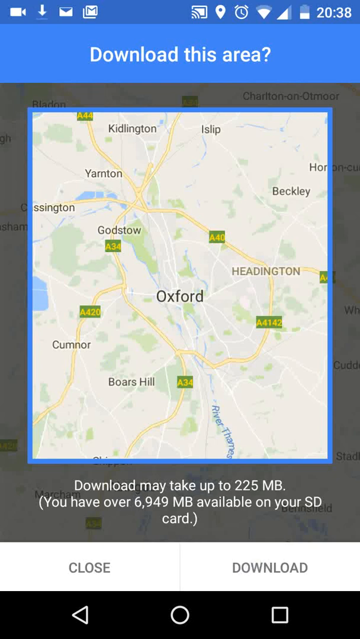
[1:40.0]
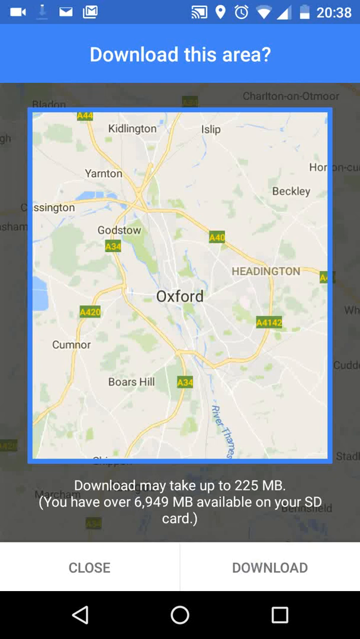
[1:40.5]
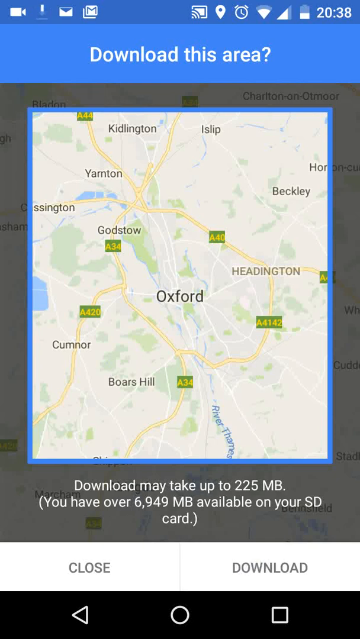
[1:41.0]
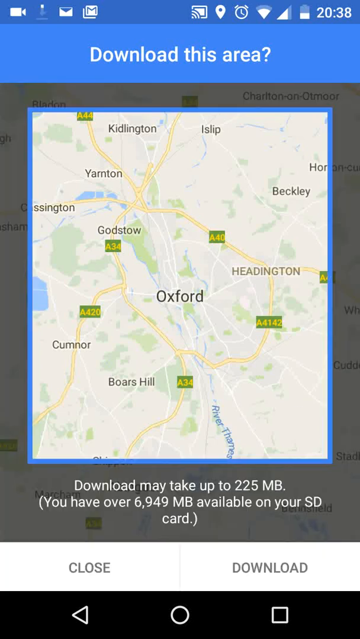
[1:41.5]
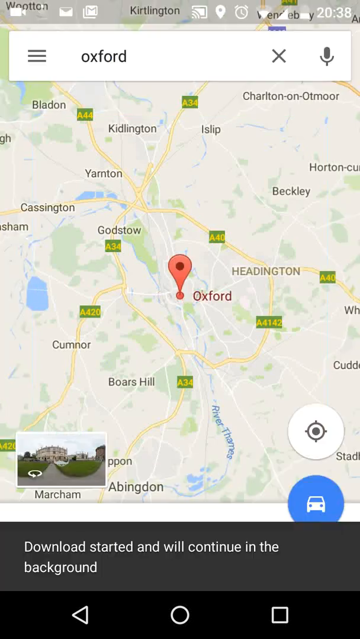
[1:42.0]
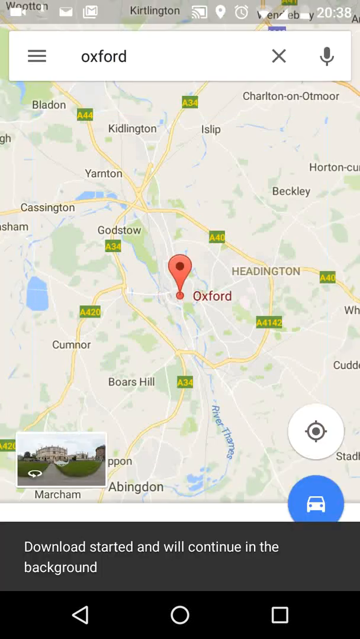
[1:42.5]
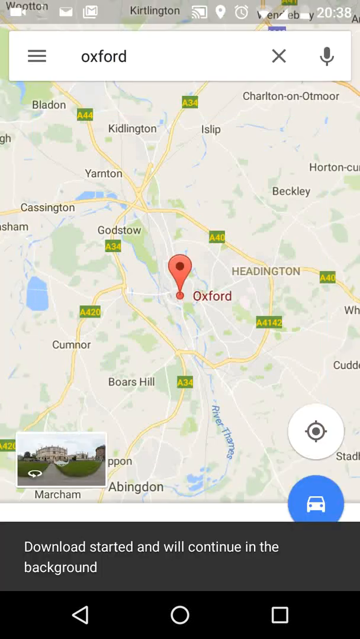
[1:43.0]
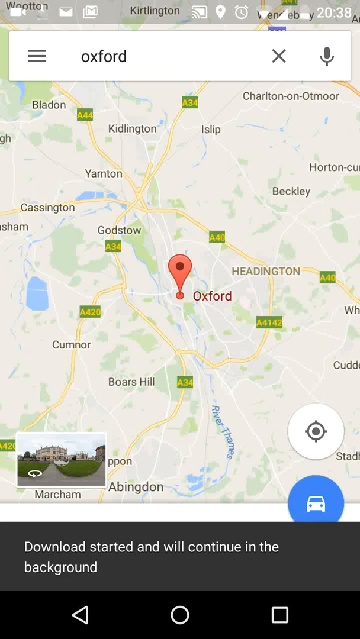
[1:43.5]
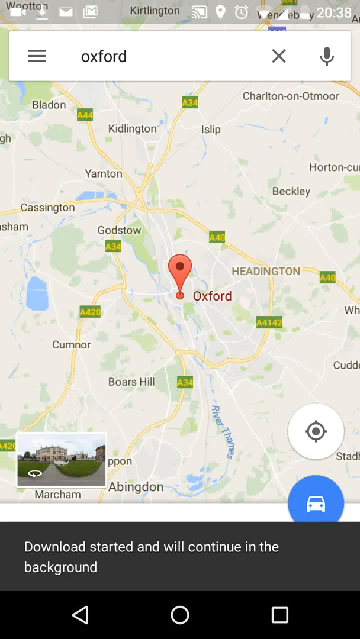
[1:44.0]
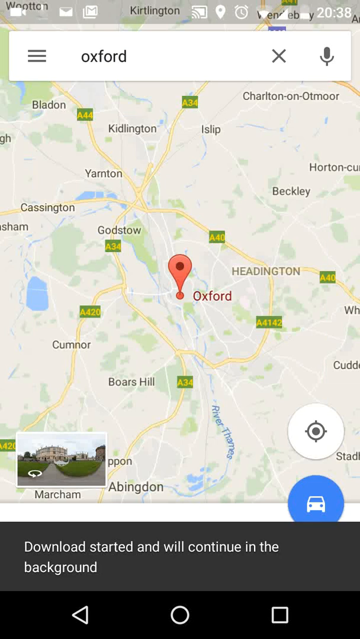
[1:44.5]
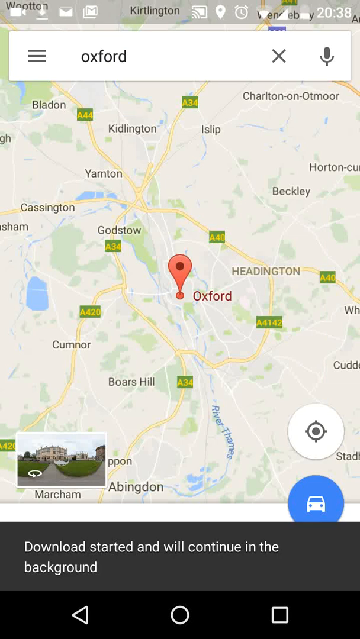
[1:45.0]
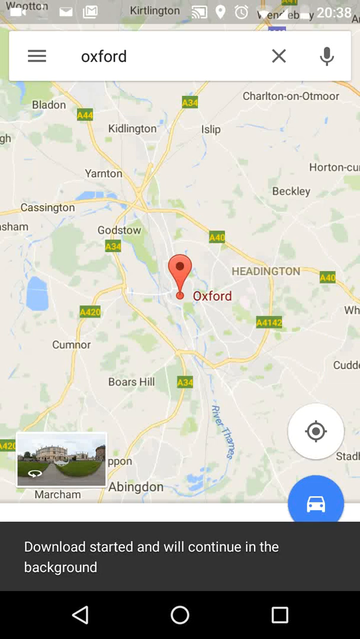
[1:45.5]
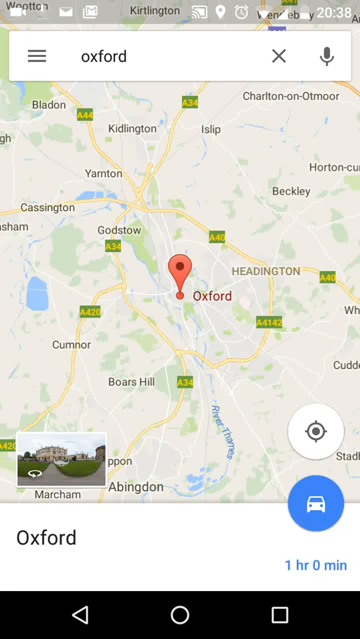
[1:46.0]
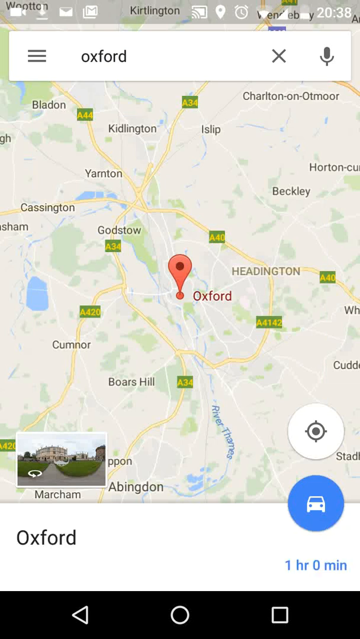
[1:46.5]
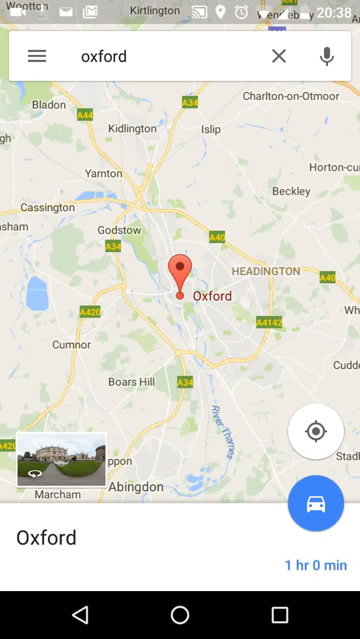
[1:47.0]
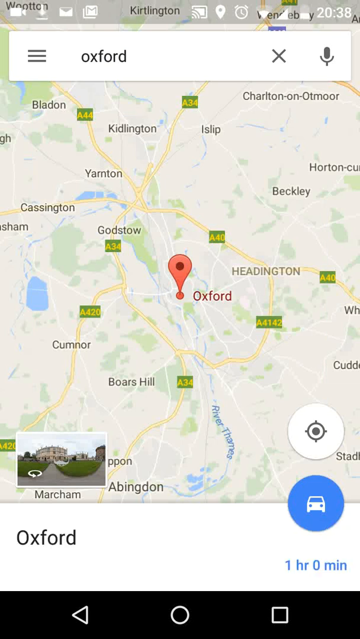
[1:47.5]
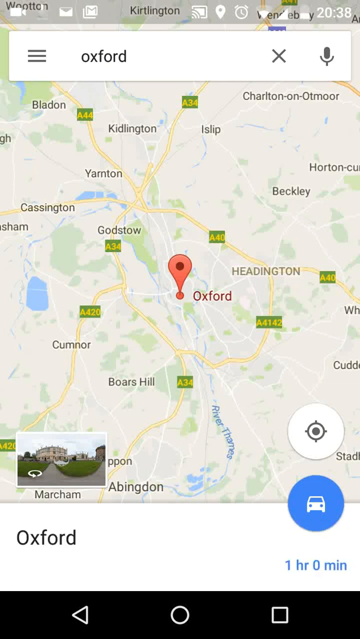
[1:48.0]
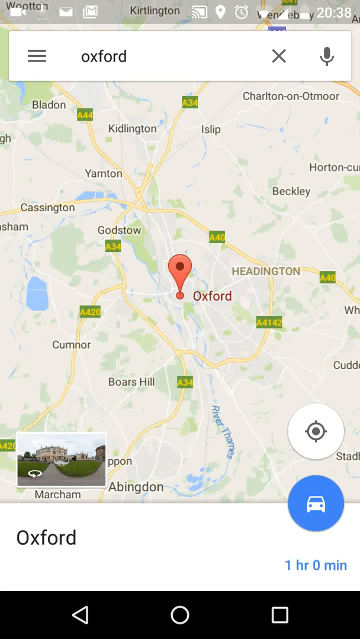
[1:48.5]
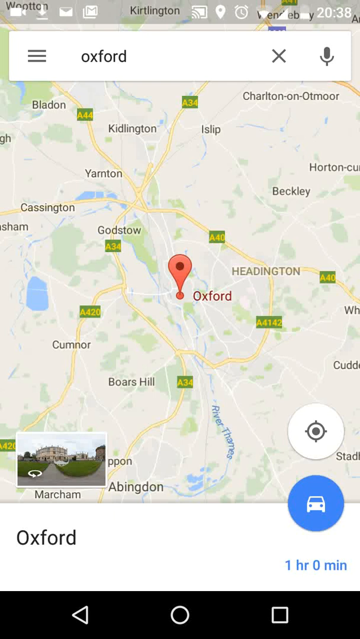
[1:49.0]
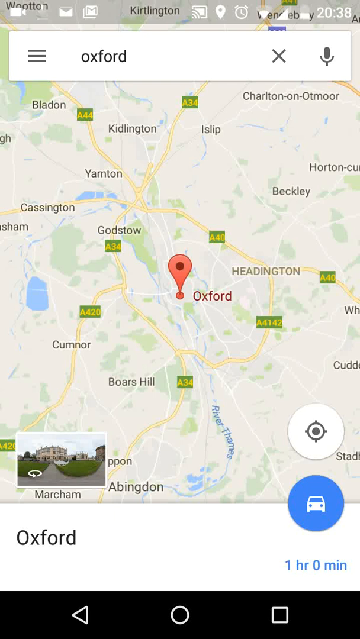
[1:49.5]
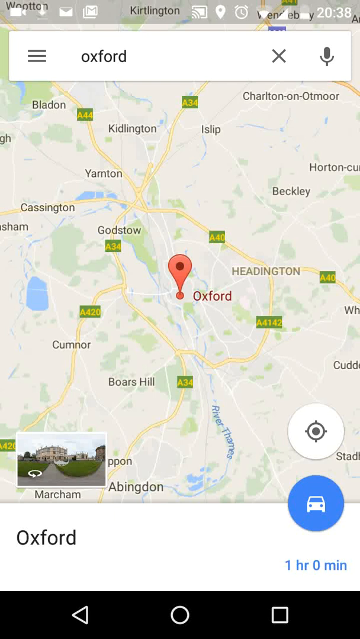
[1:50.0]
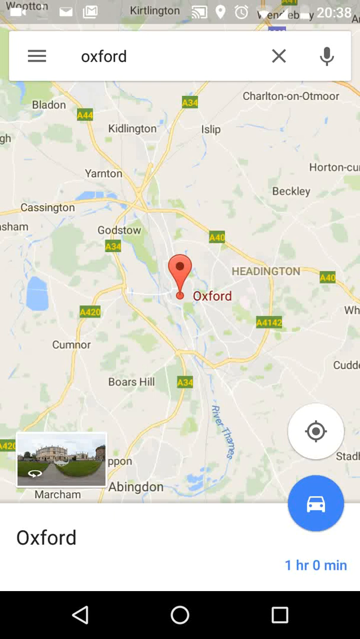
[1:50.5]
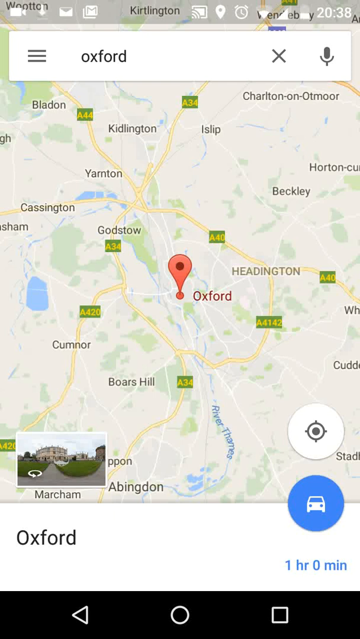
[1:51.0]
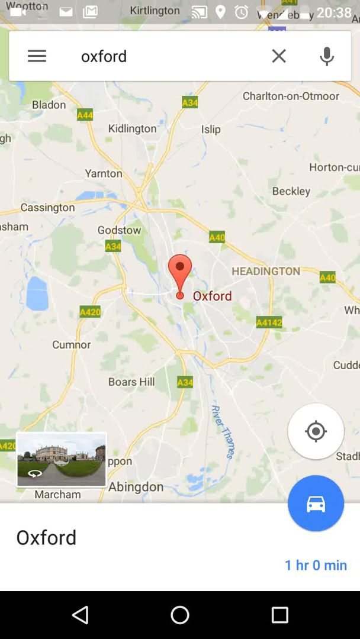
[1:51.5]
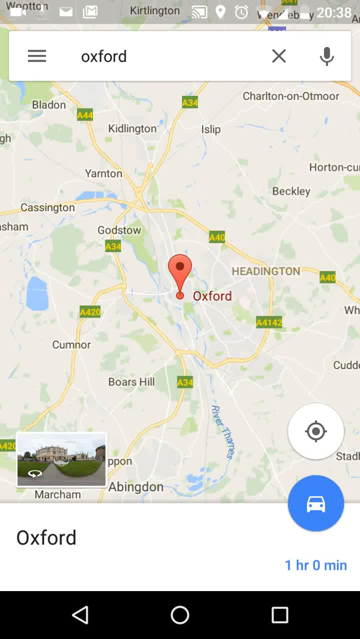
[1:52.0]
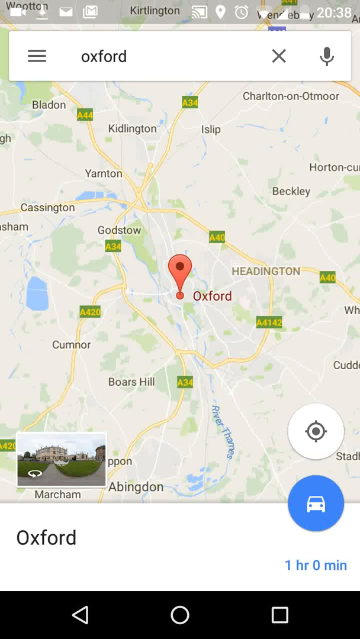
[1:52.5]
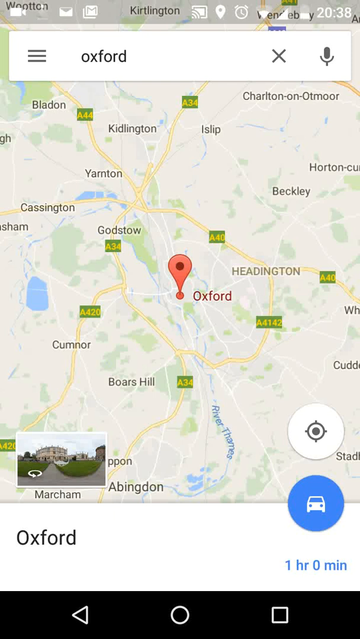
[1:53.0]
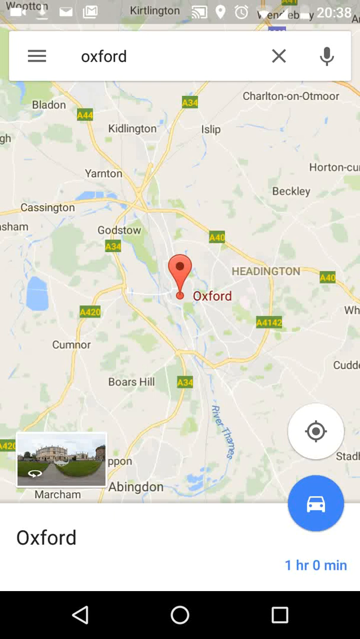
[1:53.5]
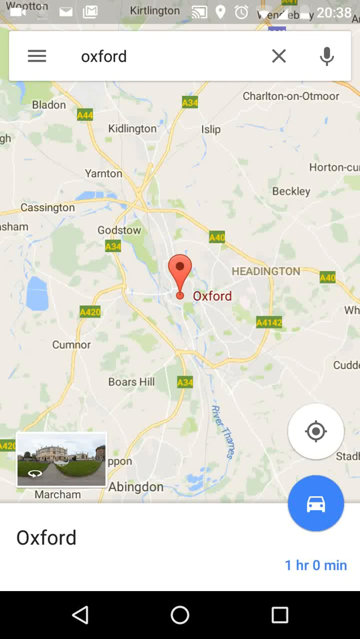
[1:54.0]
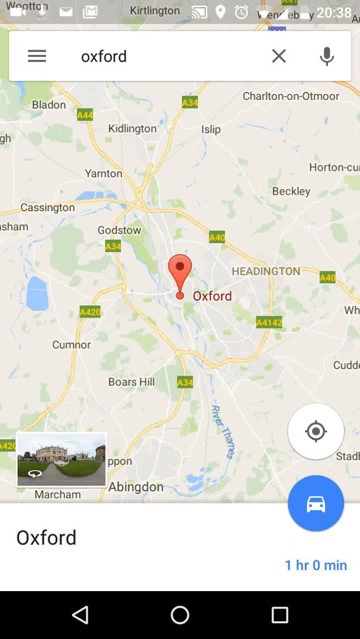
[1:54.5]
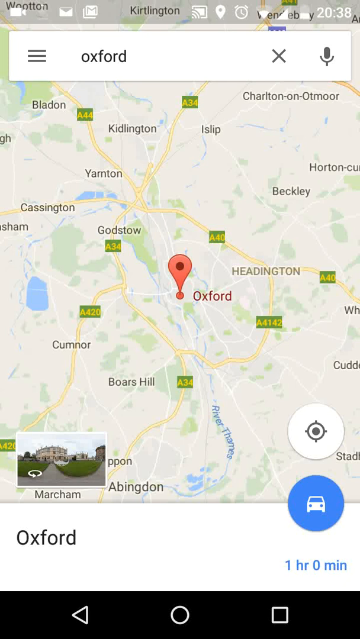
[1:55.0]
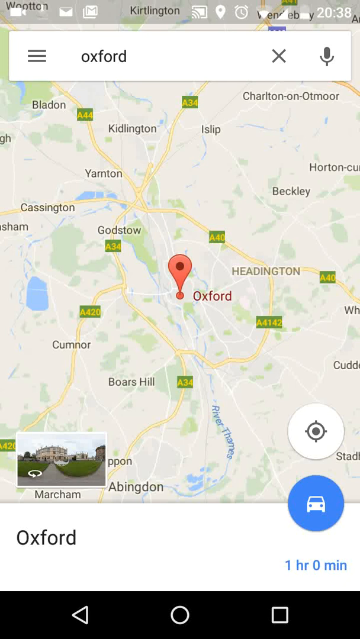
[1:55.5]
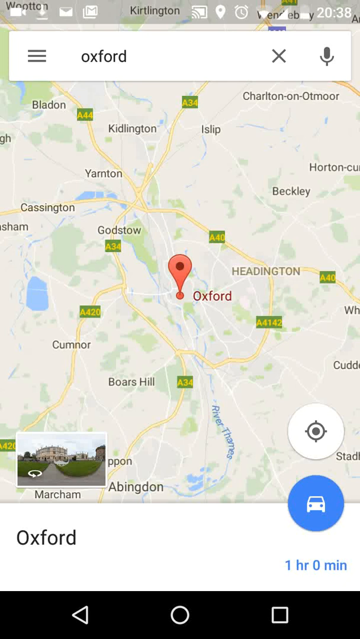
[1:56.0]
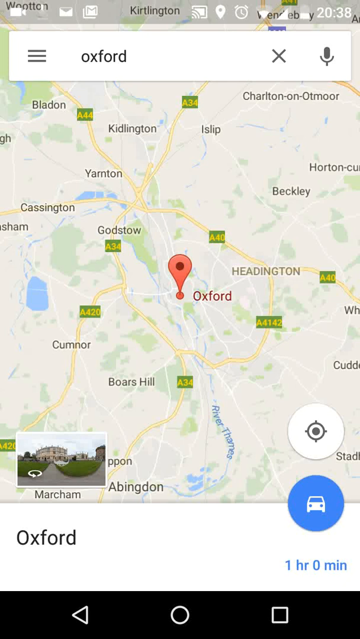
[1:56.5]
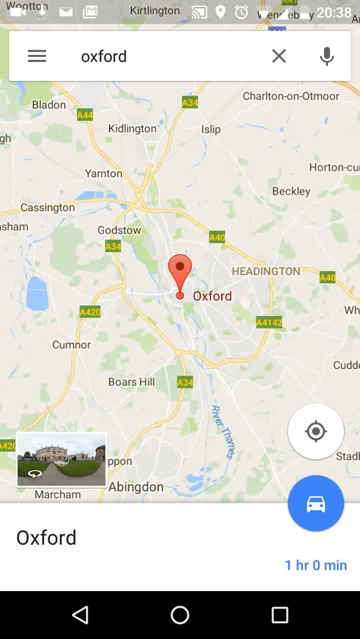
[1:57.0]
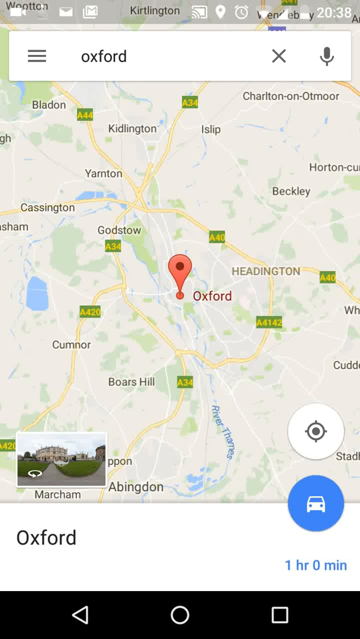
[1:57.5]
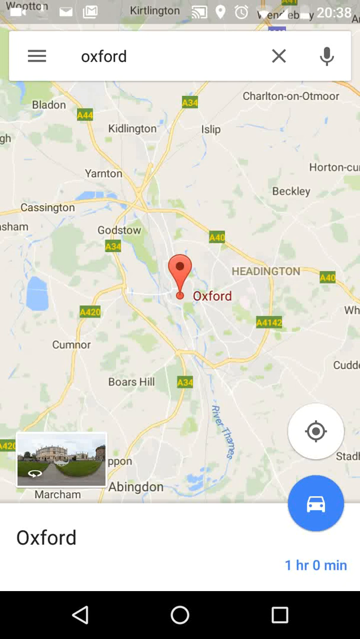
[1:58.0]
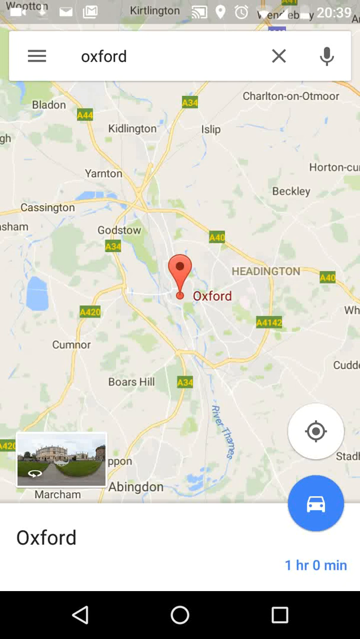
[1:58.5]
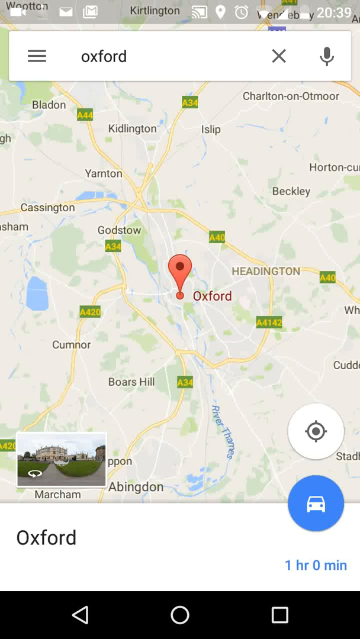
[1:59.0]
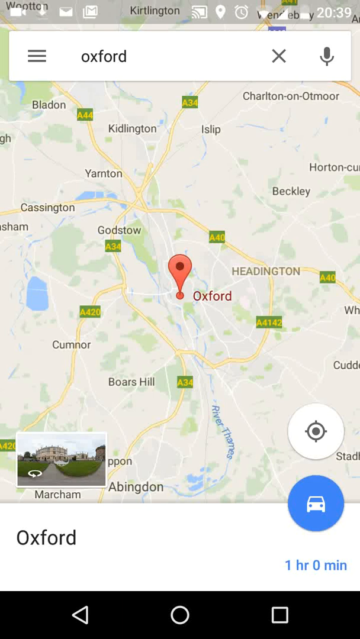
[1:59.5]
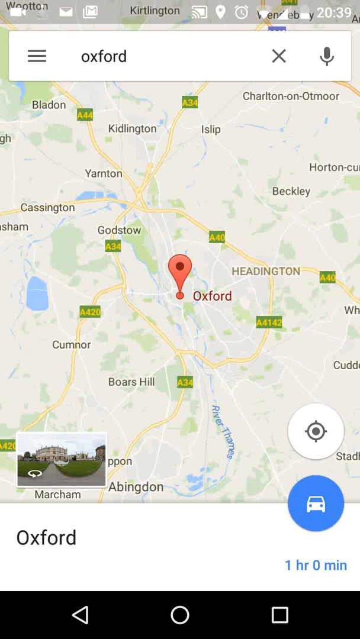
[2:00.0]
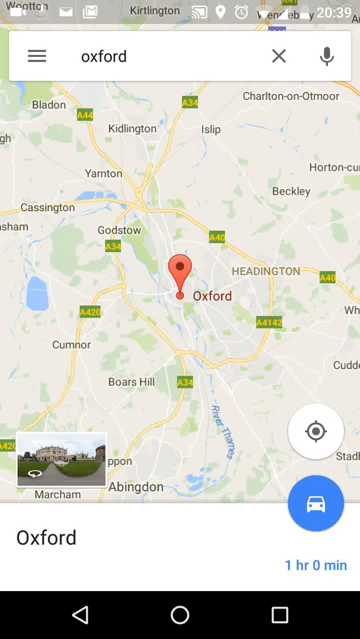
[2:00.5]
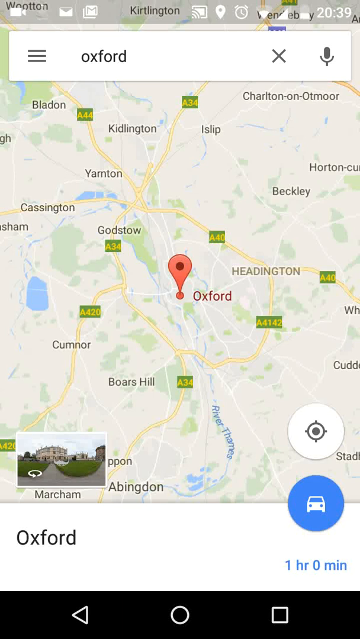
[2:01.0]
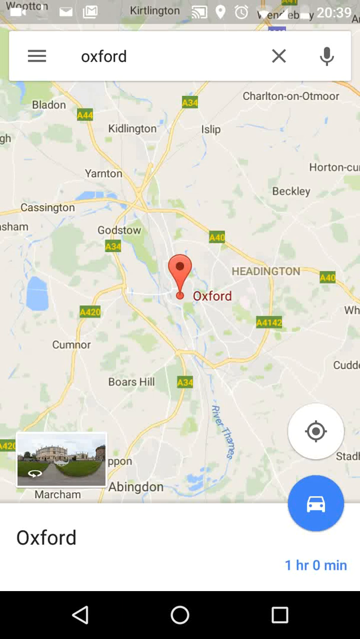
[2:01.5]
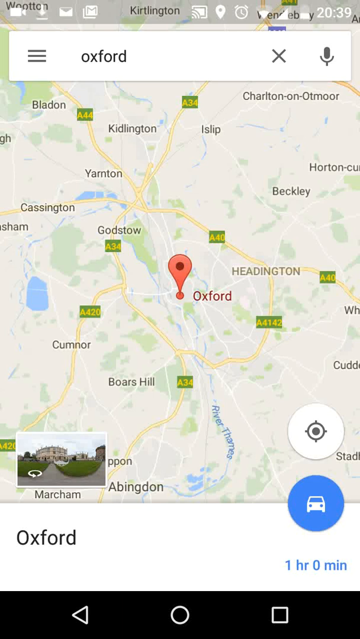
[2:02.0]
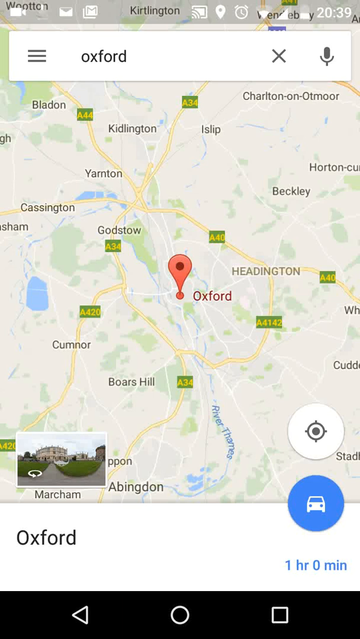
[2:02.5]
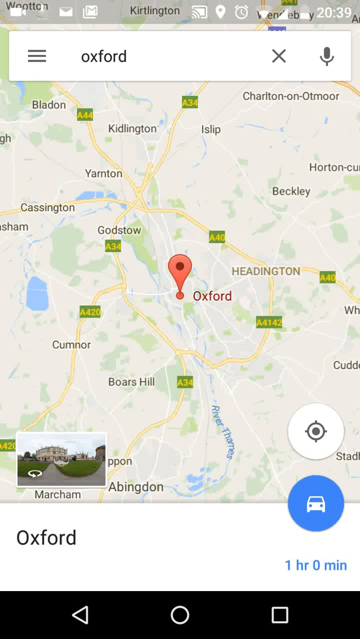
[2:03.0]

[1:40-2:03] The selected area is lit up and glowing on the map, marking the area being viewed. There seems to be a brief glitch. At the bottom are two options, "close" and "download". He taps download, and a little circle appears where he presses. A download icon sits at the very top, second from the left, between the camera and mail icons. He returns to the map with the pin, and a black box with white writing at the bottom says "download started we'll continue in the background". The battery and Wi-Fi indicators are visible, and a black bar at the bottom holds a back arrow pointing left, what appears to be a circle in the middle for the home screen, and a square to the right.